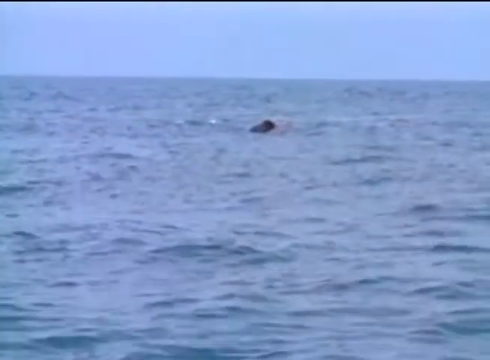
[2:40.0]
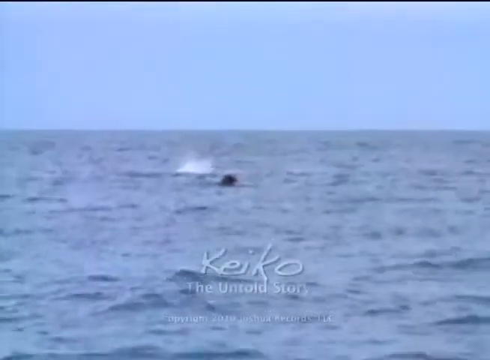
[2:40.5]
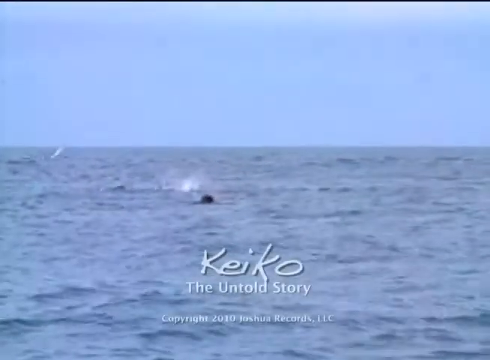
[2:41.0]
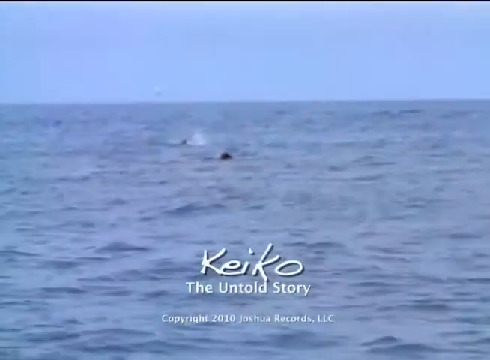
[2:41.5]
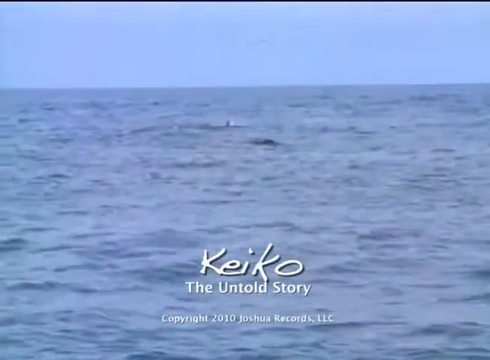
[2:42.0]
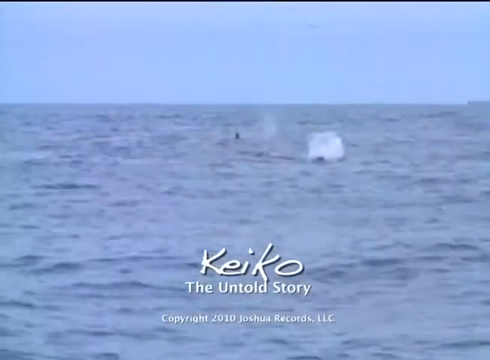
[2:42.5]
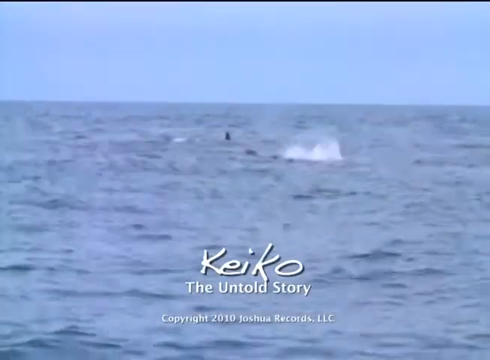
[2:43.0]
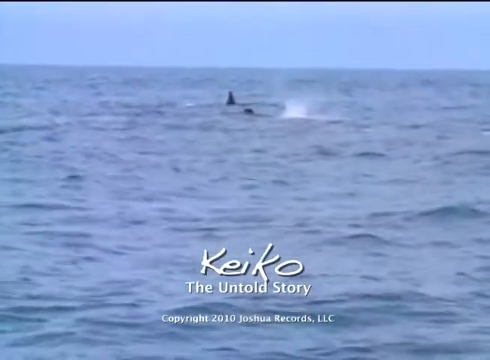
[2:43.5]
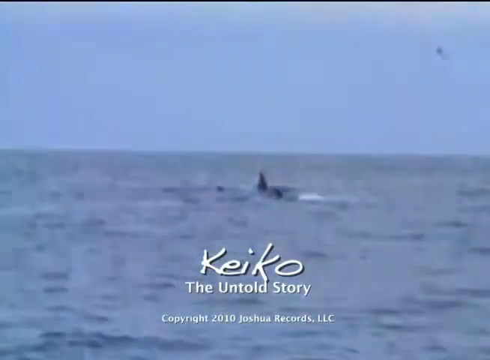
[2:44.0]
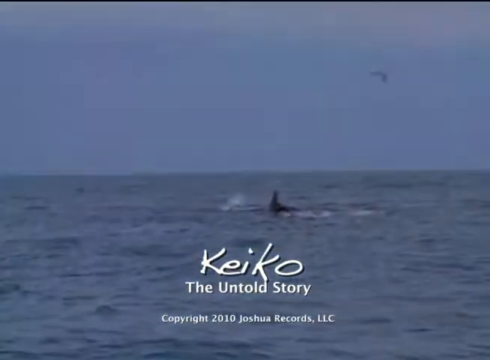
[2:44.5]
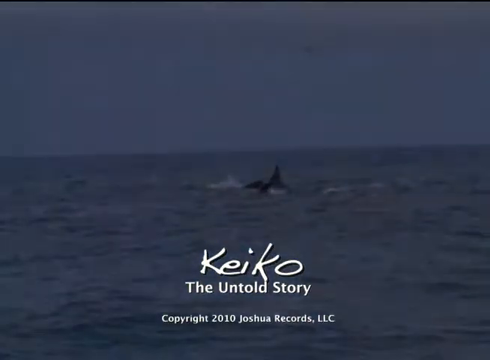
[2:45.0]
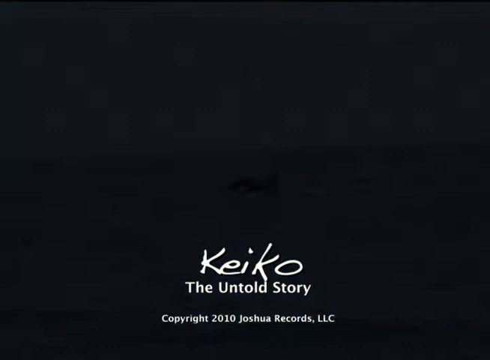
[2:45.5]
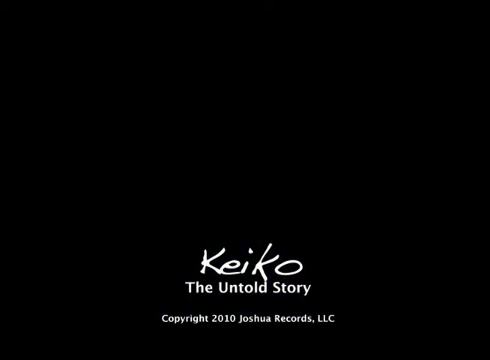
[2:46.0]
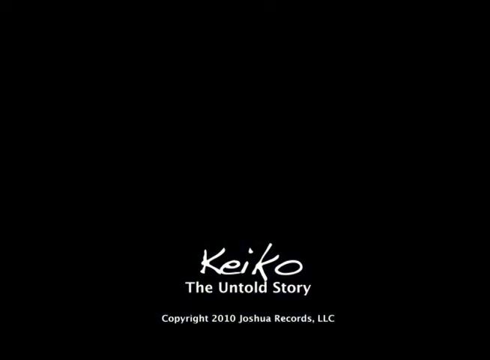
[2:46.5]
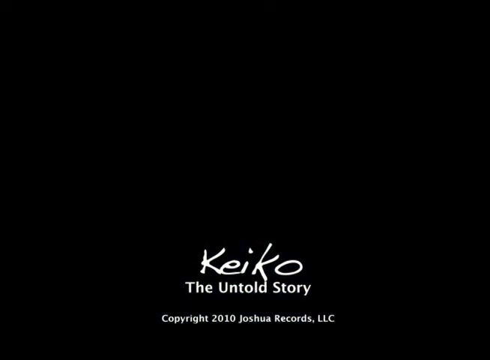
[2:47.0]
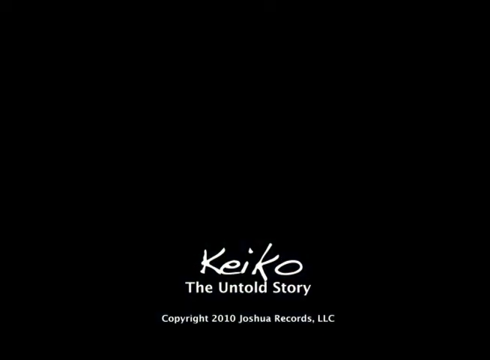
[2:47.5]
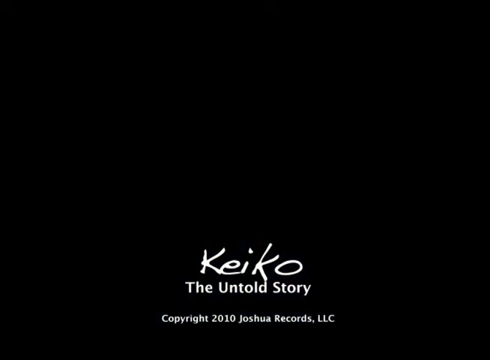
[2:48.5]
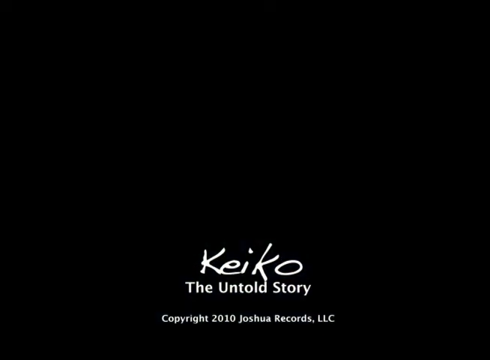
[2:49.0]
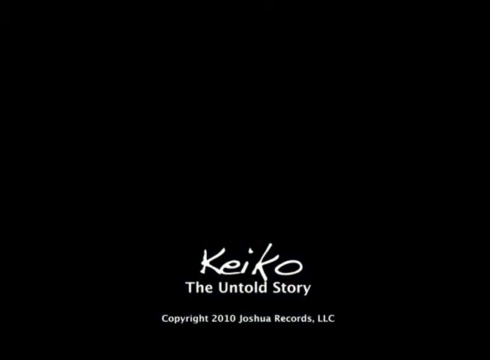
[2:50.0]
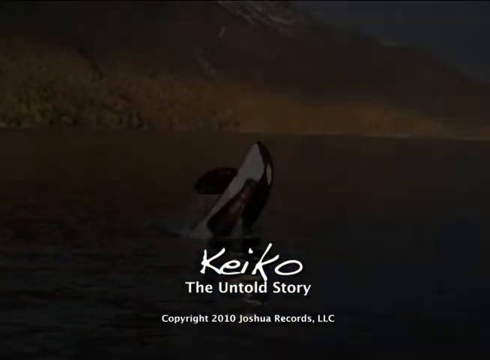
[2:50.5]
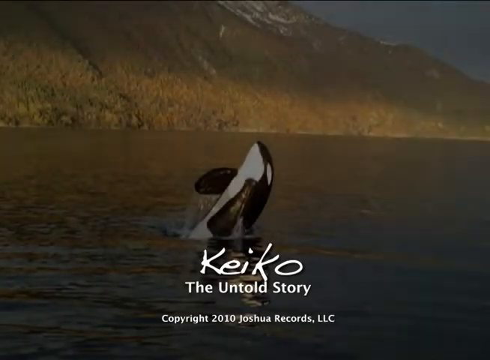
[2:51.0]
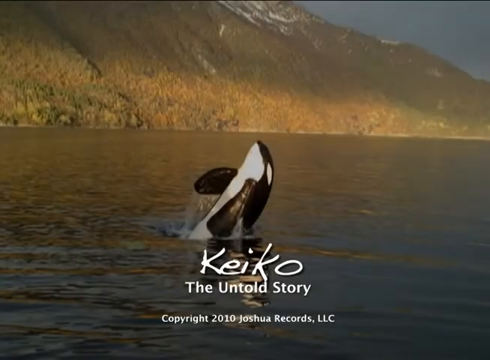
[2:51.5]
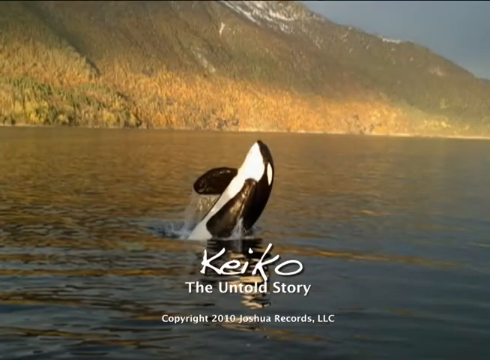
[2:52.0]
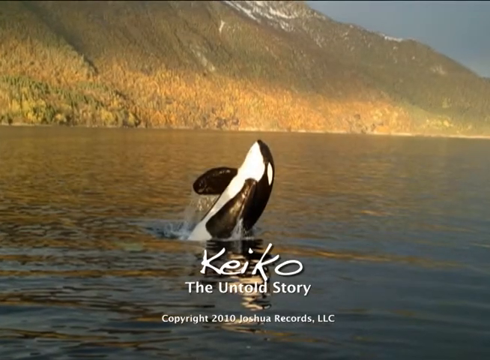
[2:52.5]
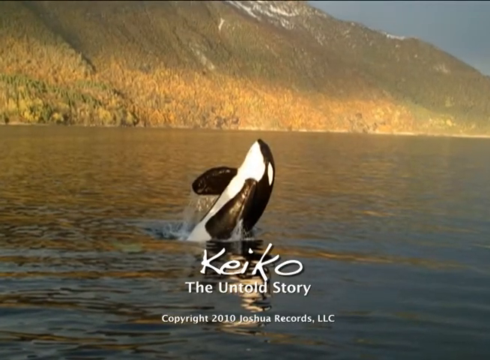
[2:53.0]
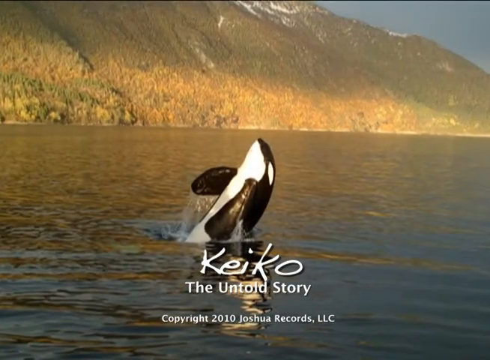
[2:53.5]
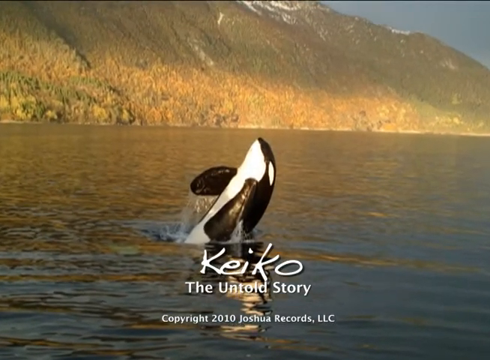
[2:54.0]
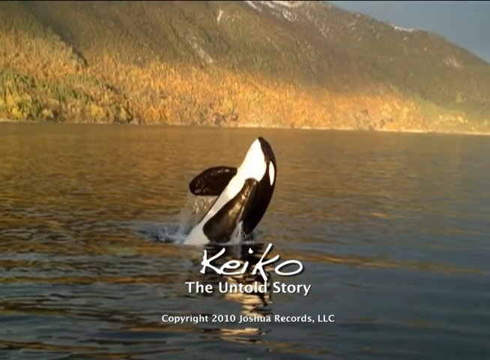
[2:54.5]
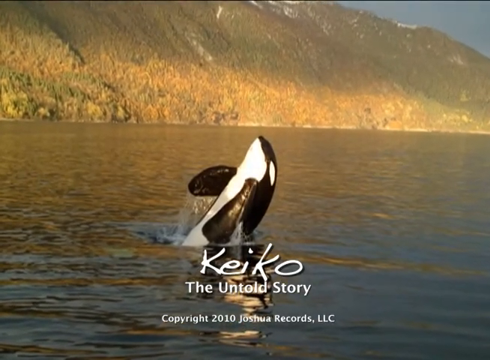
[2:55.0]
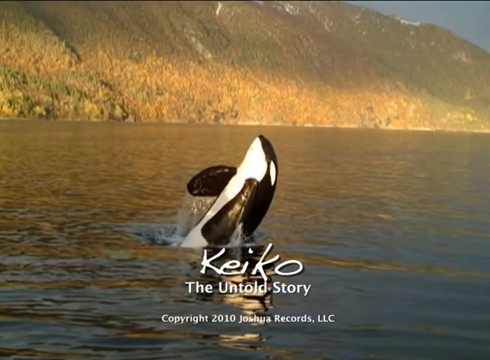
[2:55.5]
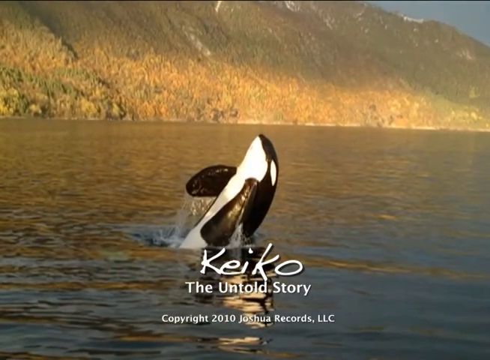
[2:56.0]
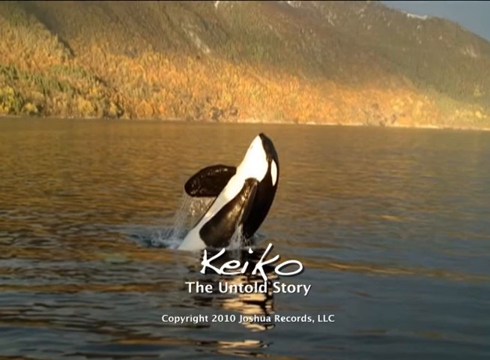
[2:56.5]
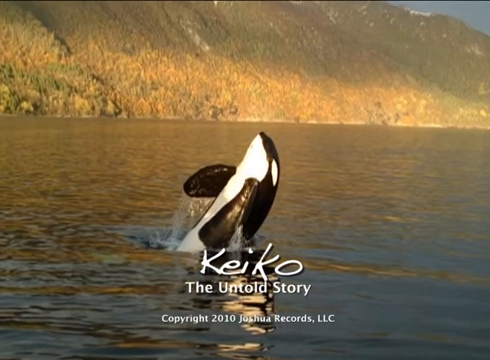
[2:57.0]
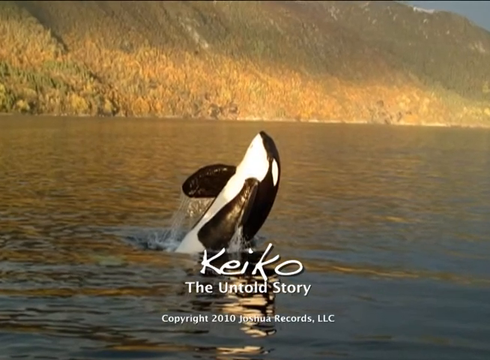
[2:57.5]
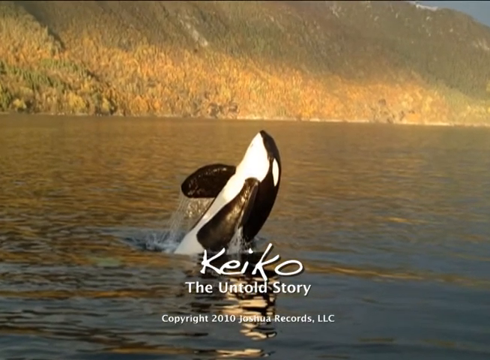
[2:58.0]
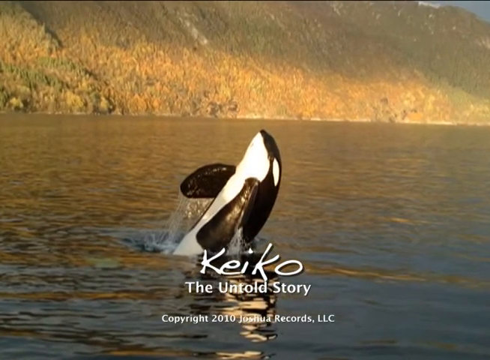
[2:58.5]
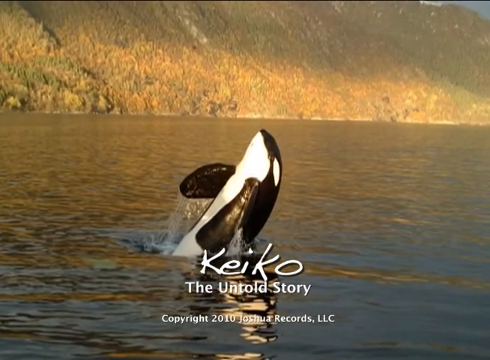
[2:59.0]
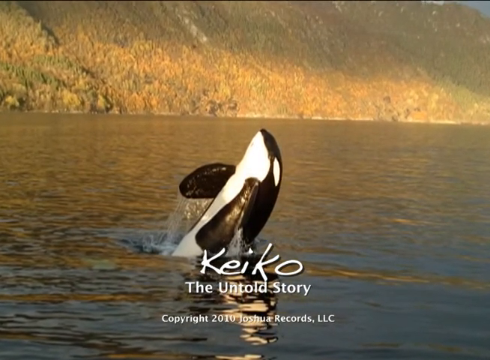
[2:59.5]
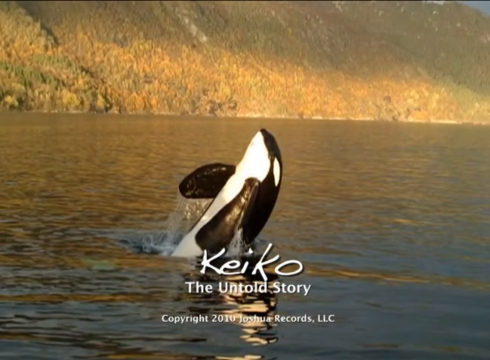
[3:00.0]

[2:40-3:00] A split-screen shot shows a gray-blue ocean with a blue-gray sky in the background, and two orcas swimming in the water. A white seabird flies across the scene from left to right as the orcas spit water from their blowholes and splash at the surface. Text at the bottom of the screen says "Keiko The Untold Story, Copyright, 2010, Joshua Records, LLC." The shot fades out as another white seabird flies across the screen from right to left. The background becomes all black, leaving only the white lettering "Keiko The Untold Story, copyright 2010 Joshua Records, LLC." The shot switches to a still shot of an orca jumping out of the water, with a brown and green, tree-covered mountain cliff with a slight snow cap at the top in the background. The camera pans closer to the orca jumping out of the water.